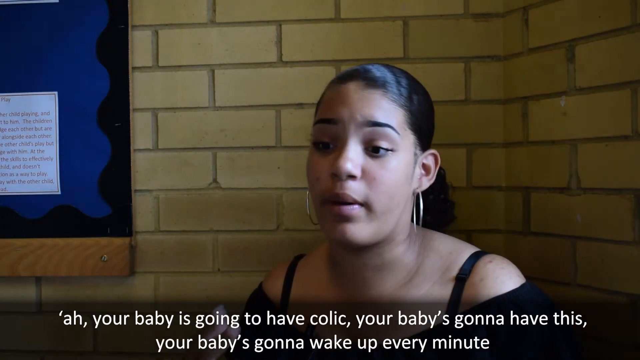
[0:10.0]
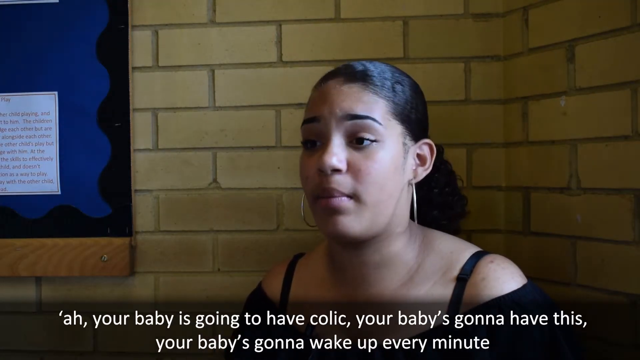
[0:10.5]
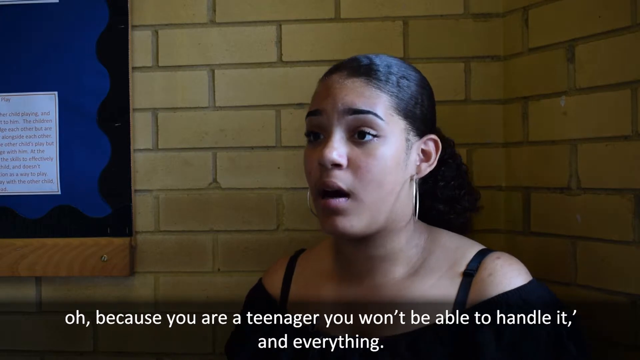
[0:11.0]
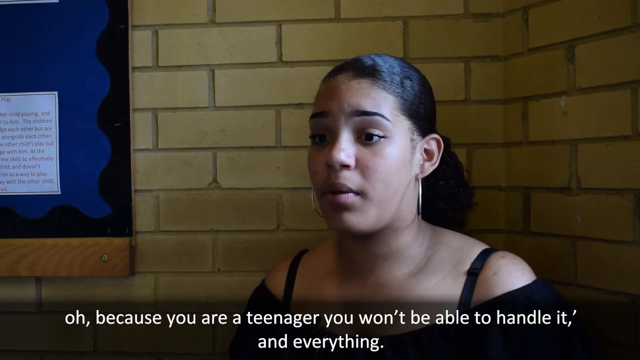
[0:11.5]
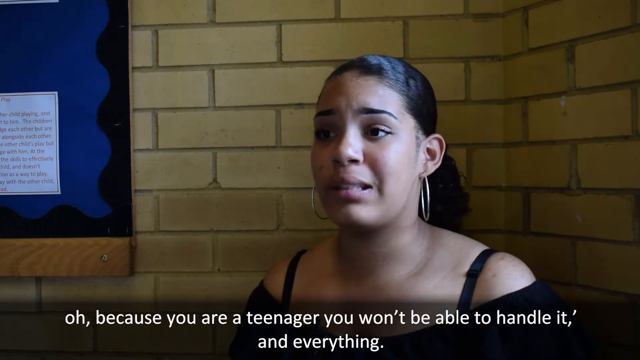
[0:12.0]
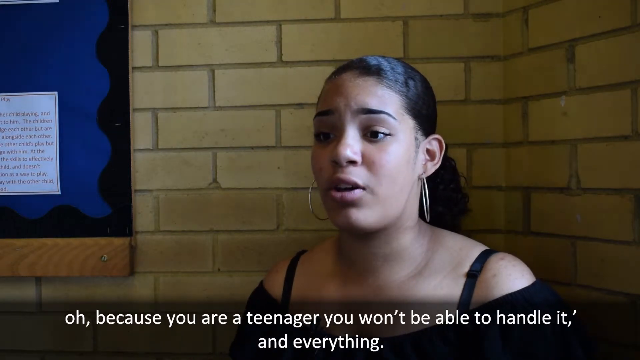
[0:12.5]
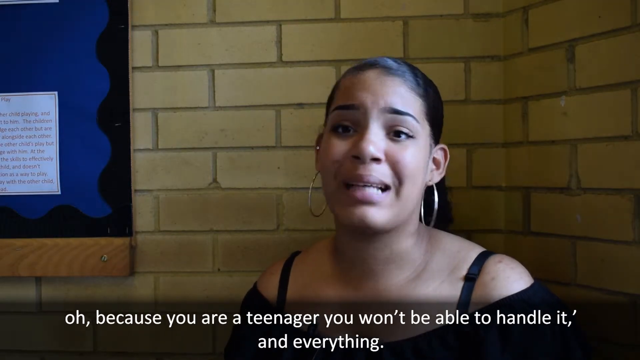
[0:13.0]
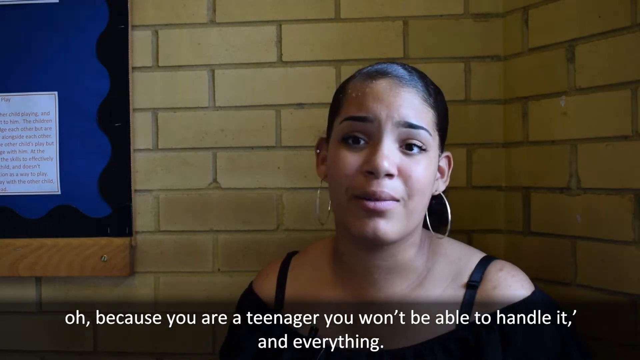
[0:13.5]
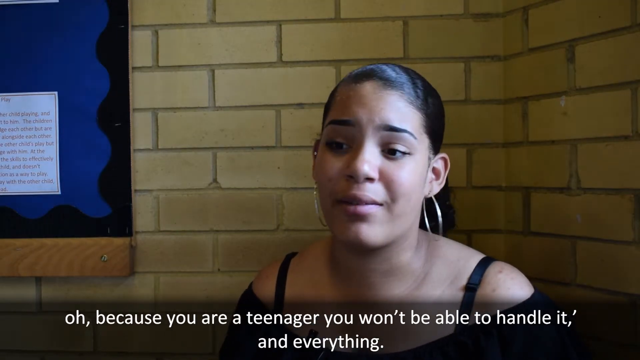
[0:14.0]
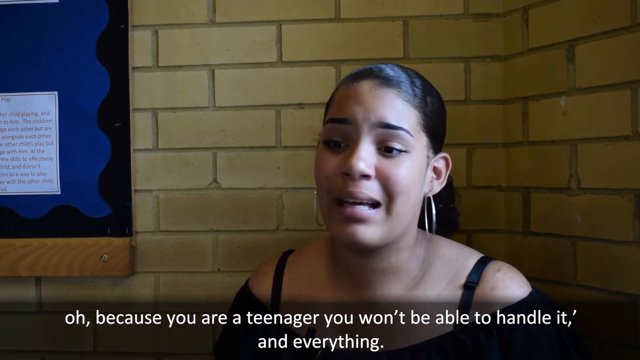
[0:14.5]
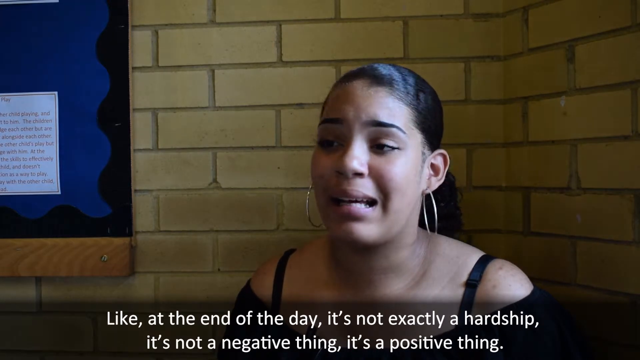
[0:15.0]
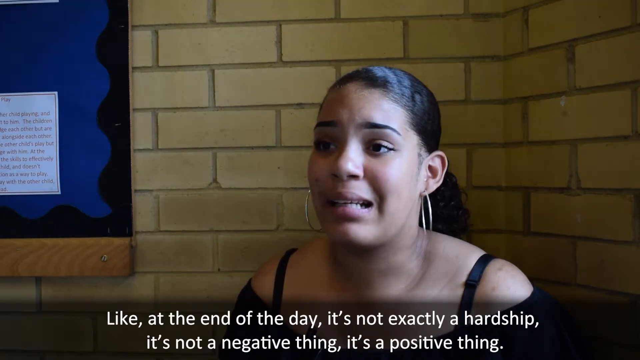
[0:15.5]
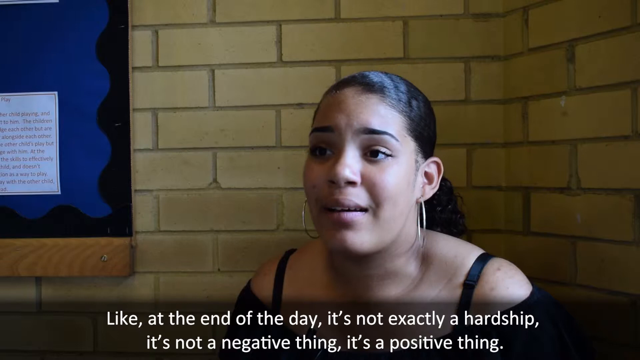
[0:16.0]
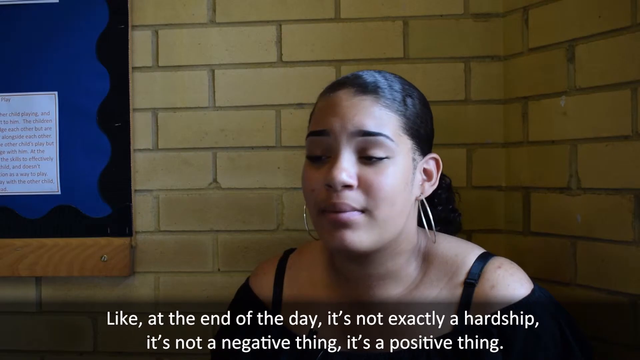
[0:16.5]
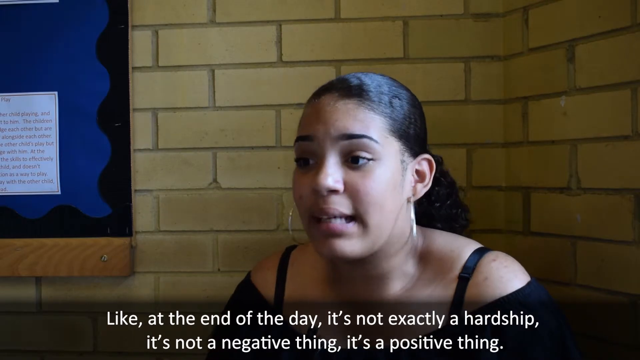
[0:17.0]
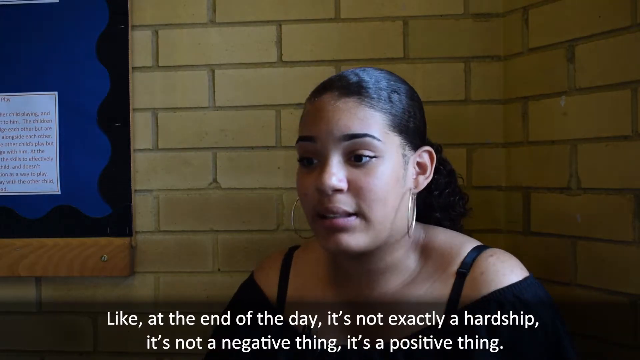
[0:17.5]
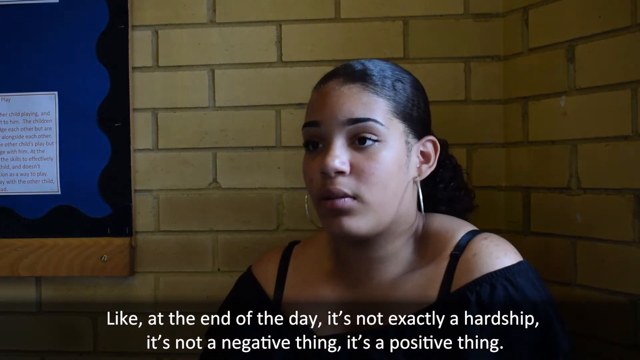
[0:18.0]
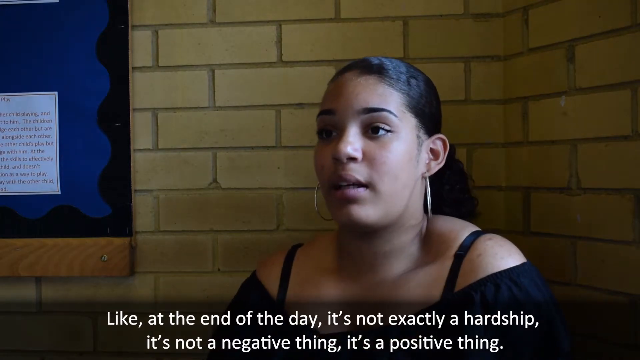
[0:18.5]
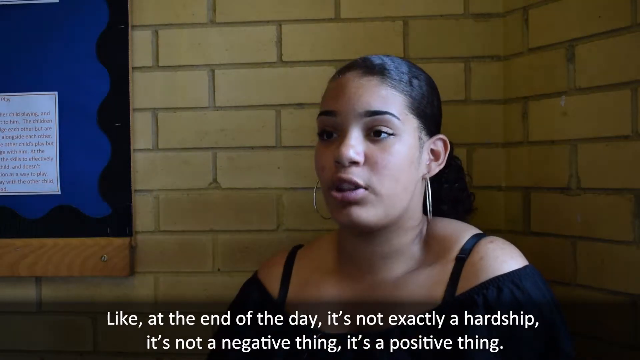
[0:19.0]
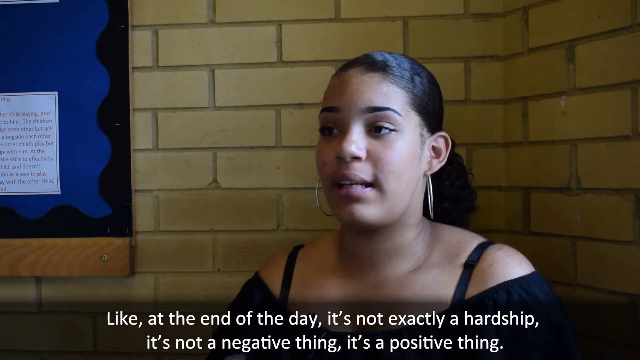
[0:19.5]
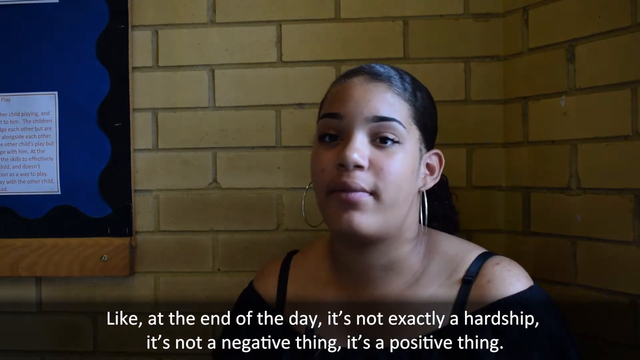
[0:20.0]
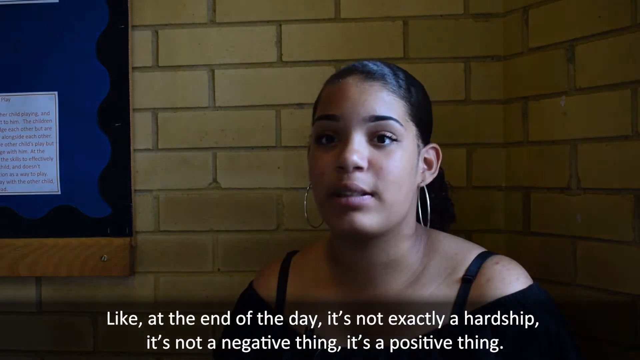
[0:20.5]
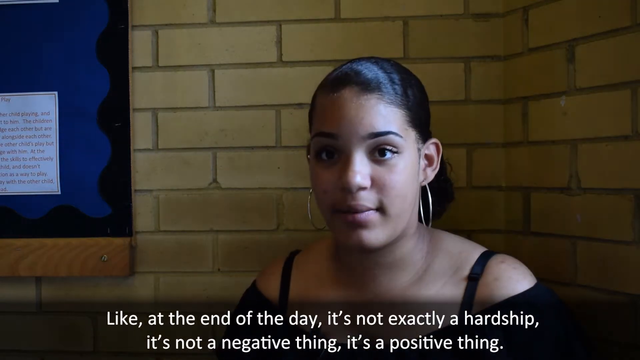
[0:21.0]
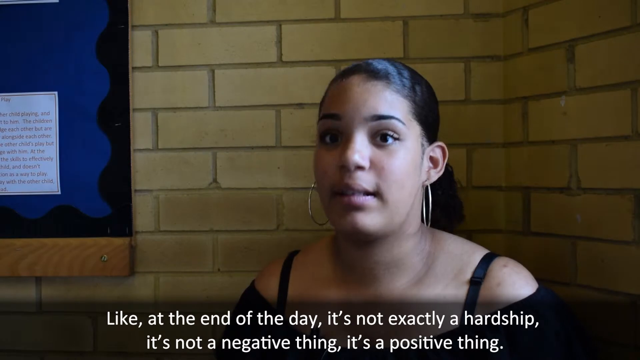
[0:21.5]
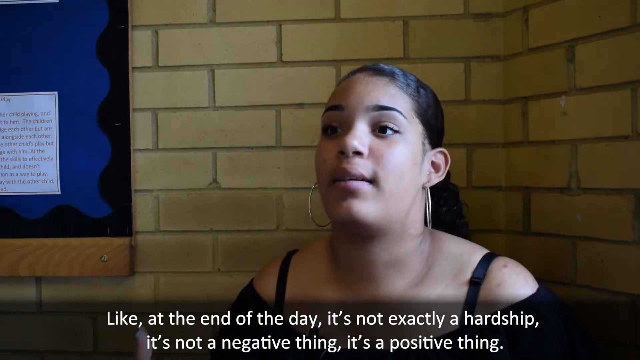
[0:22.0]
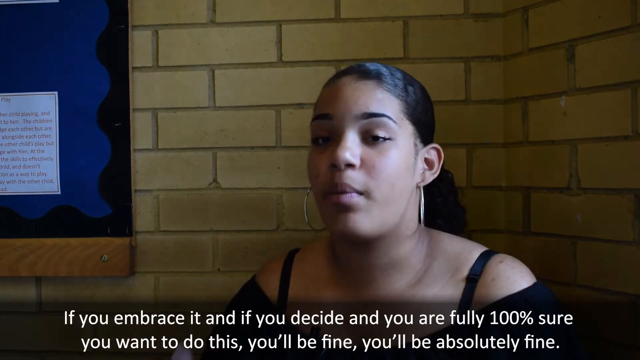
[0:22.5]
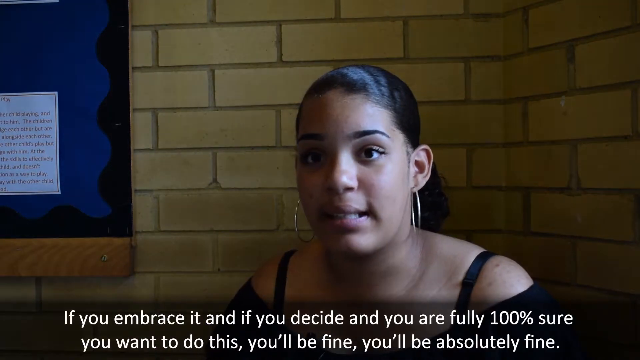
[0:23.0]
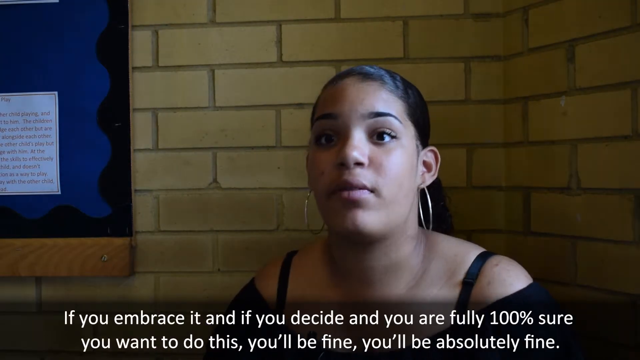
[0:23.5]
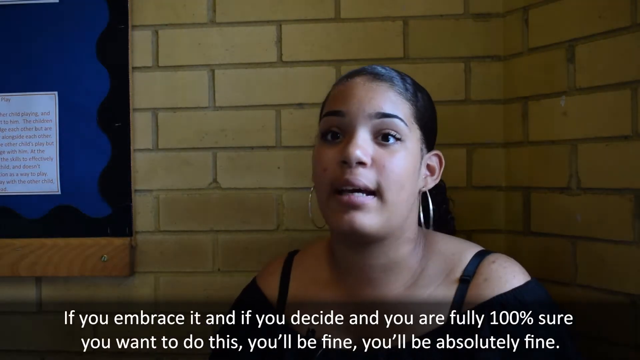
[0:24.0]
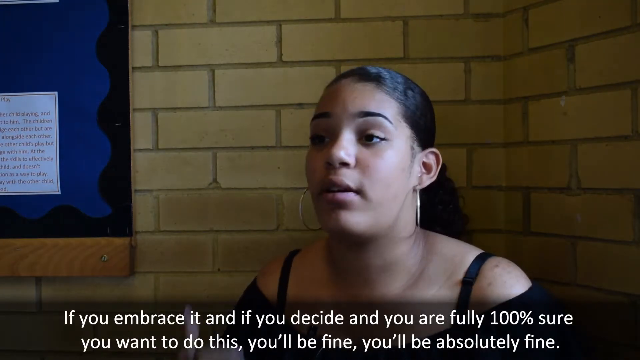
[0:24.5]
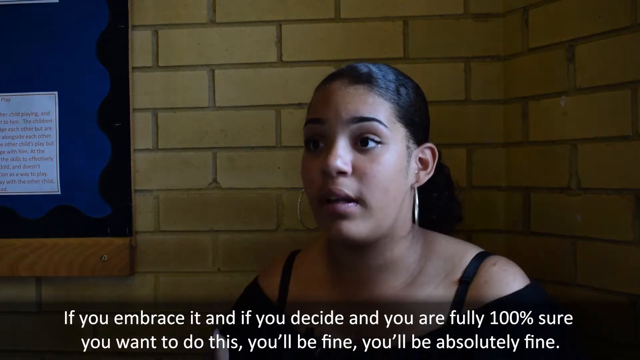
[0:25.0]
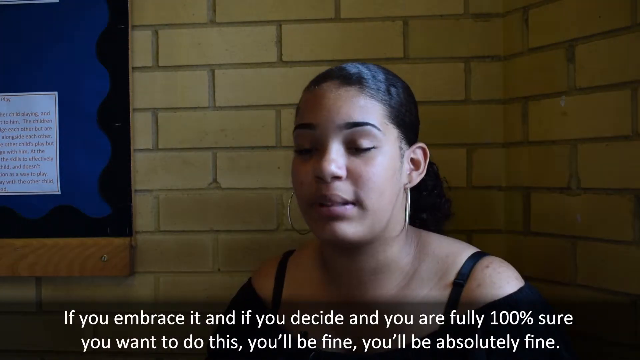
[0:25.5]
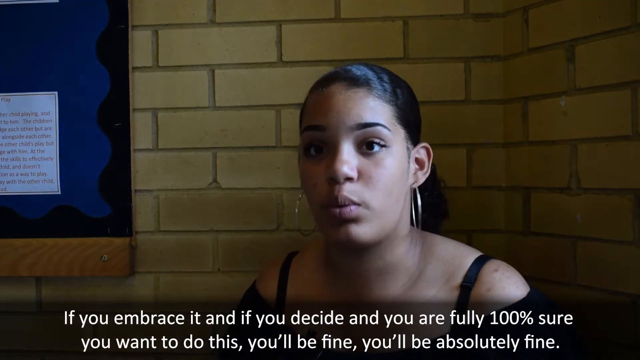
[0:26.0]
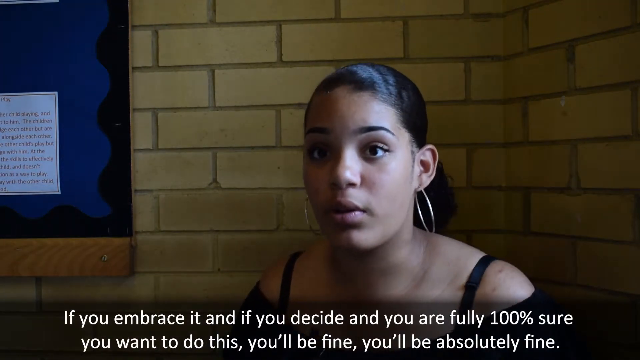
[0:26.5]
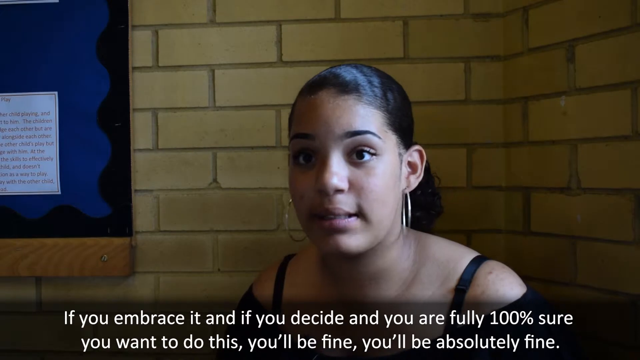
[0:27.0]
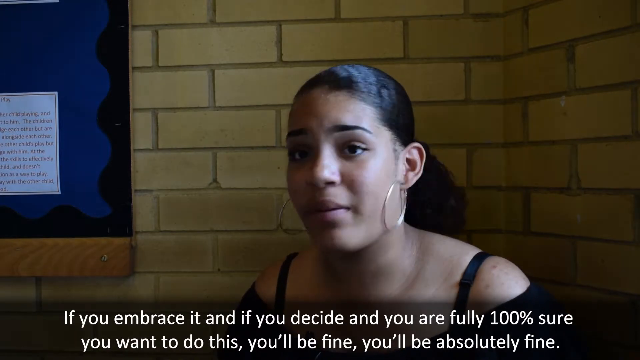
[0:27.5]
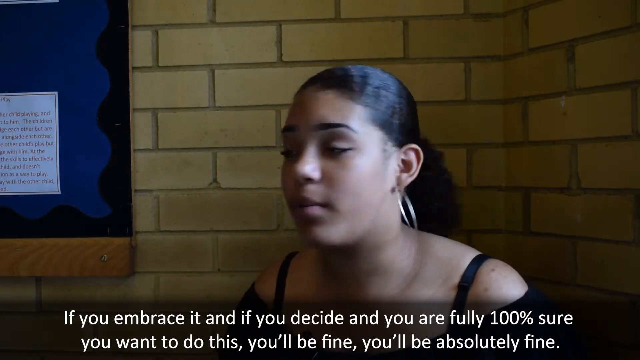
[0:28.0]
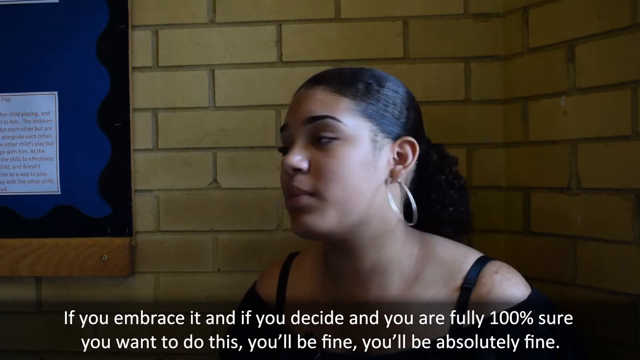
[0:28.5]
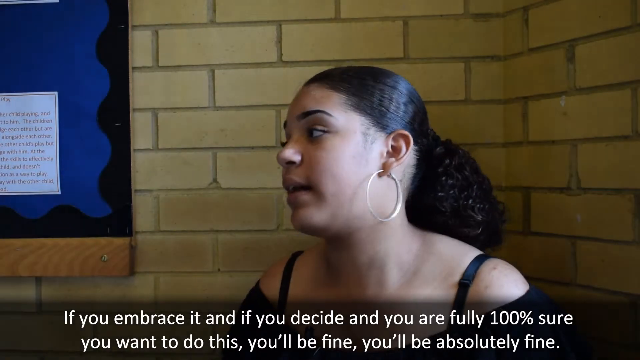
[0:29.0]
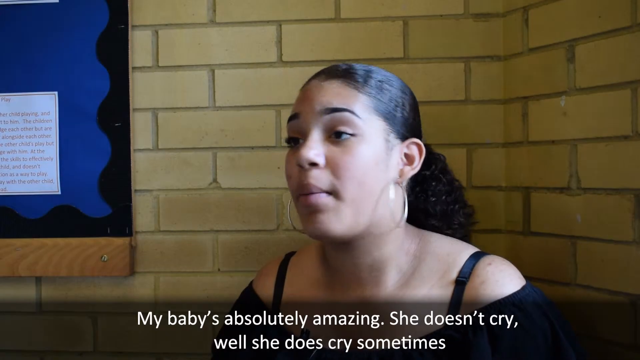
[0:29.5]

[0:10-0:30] The mother continues speaking to the camera, looking toward the left of the screen, shaking her head as she speaks, then moving her head forward and shrugging her shoulders. The text at the bottom of the screen says that motherhood is difficult, but if you are fully committed to it, it is not that bad. The background is still tan-colored brick, and she seems to be sitting indoors. On the left-hand side of the screen there is a partition within the bricks that shows a blue background. She wears large gold hoop earrings in both ears and a black spaghetti-strap top, and her black hair is slicked back. Her skin is darker in shade, her head is round, and she gestures a lot with her head as she speaks.